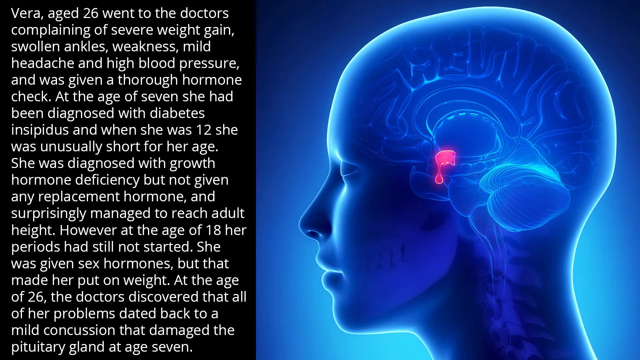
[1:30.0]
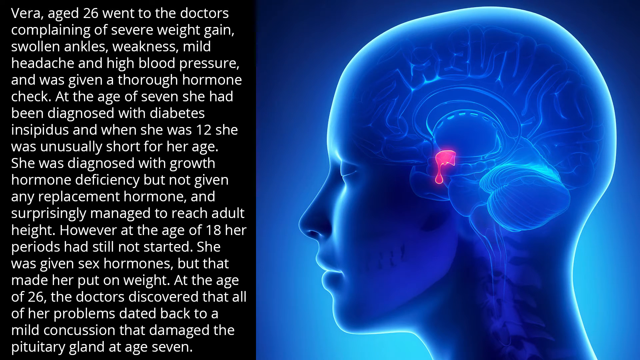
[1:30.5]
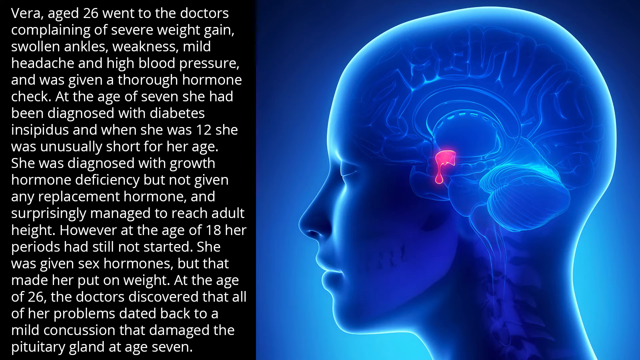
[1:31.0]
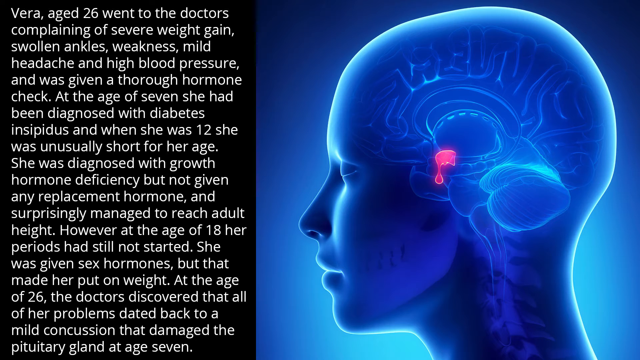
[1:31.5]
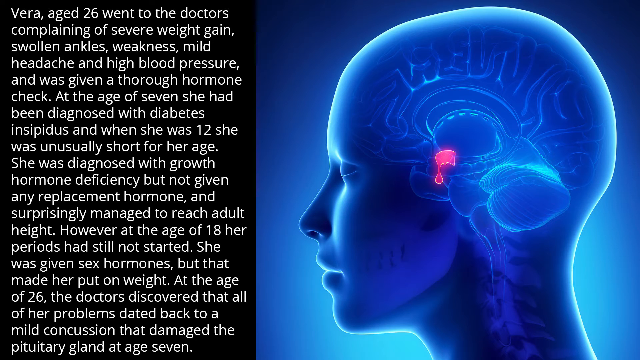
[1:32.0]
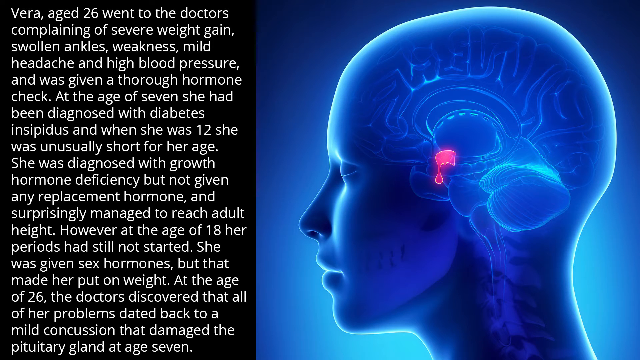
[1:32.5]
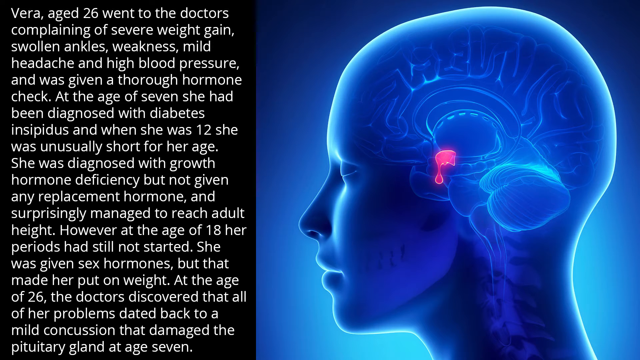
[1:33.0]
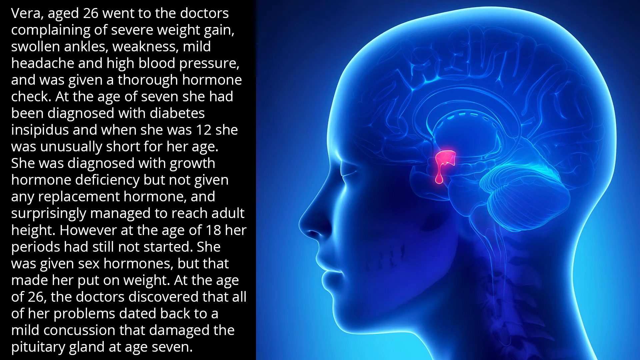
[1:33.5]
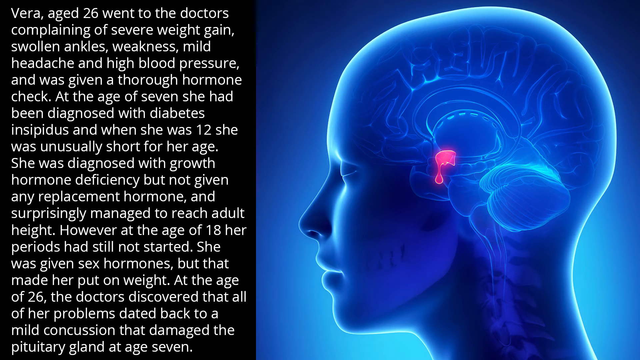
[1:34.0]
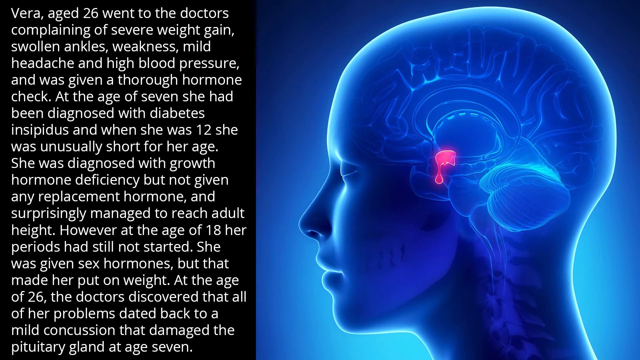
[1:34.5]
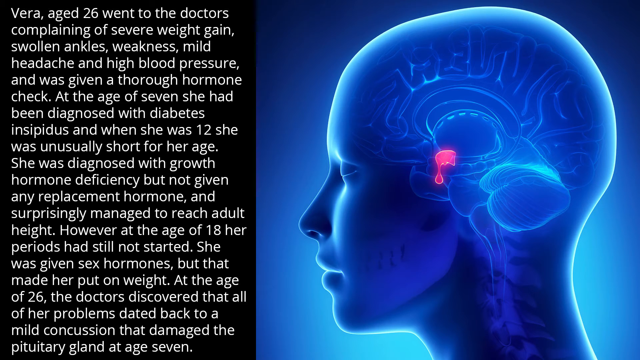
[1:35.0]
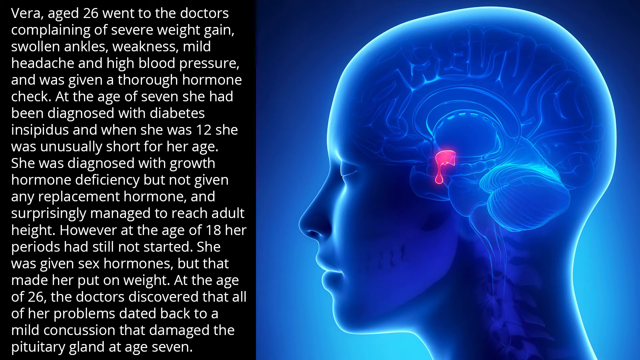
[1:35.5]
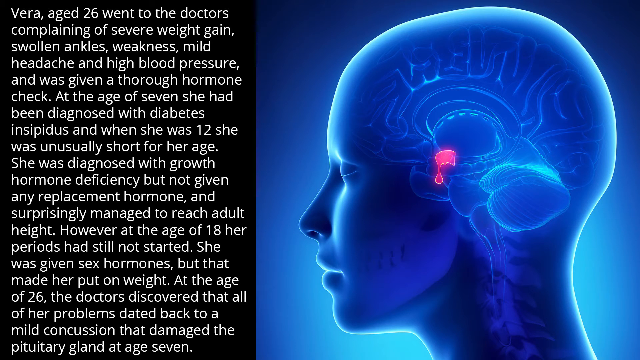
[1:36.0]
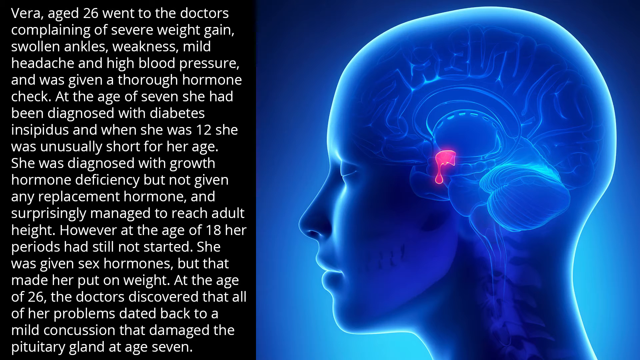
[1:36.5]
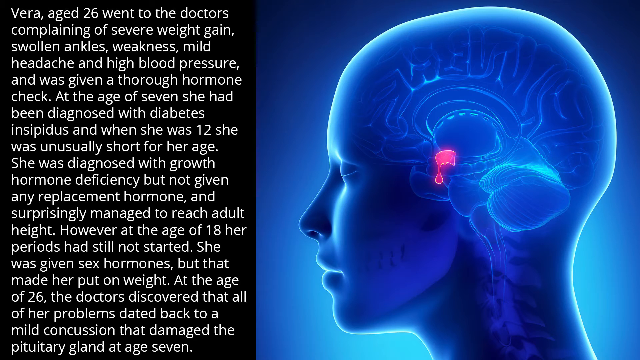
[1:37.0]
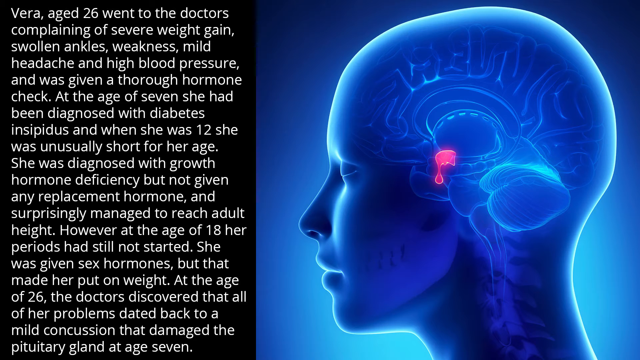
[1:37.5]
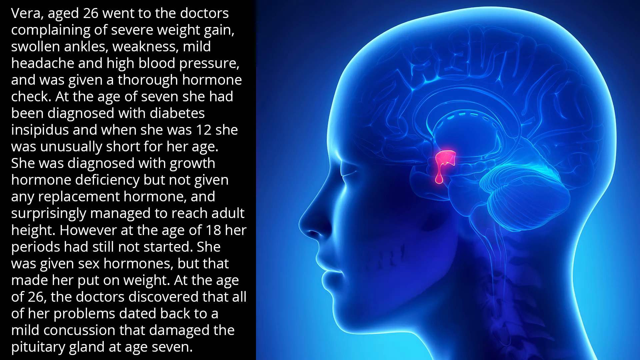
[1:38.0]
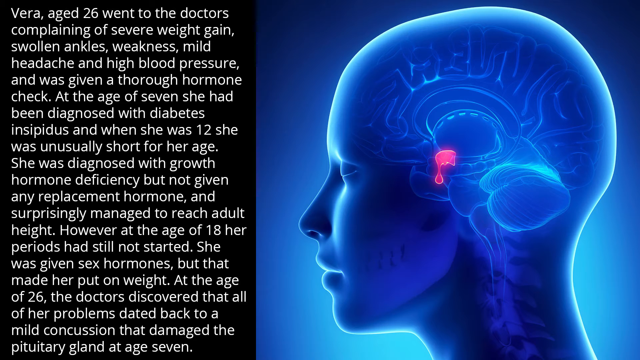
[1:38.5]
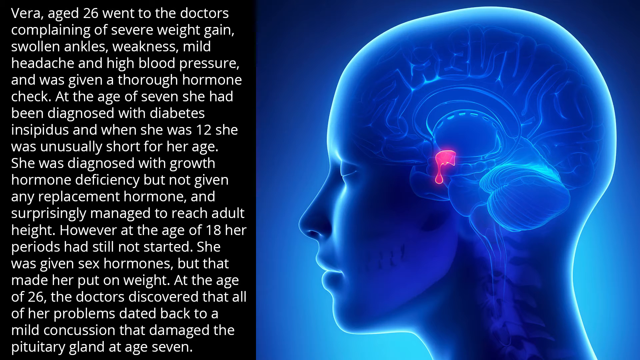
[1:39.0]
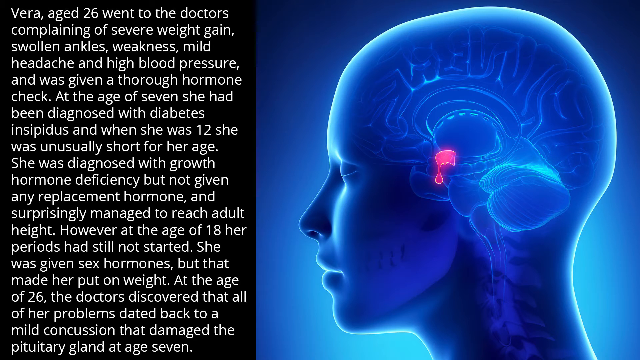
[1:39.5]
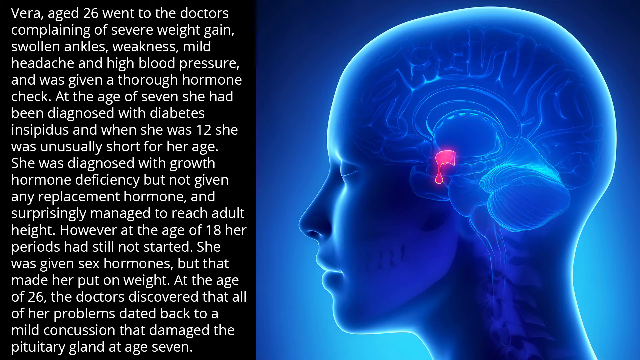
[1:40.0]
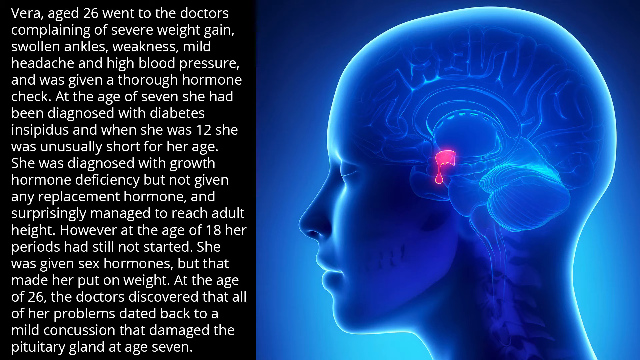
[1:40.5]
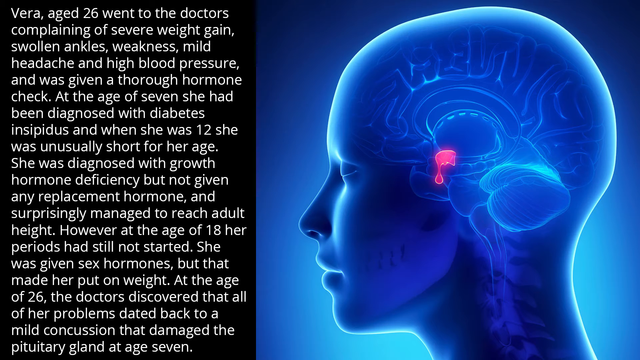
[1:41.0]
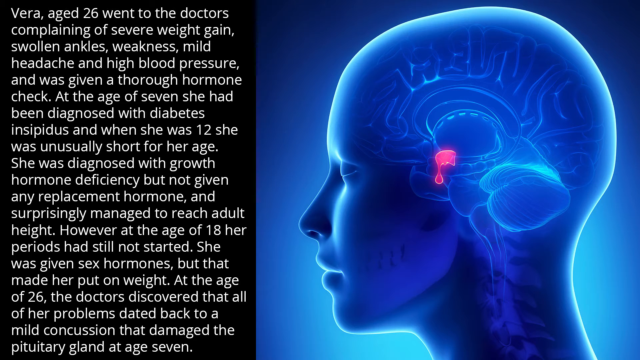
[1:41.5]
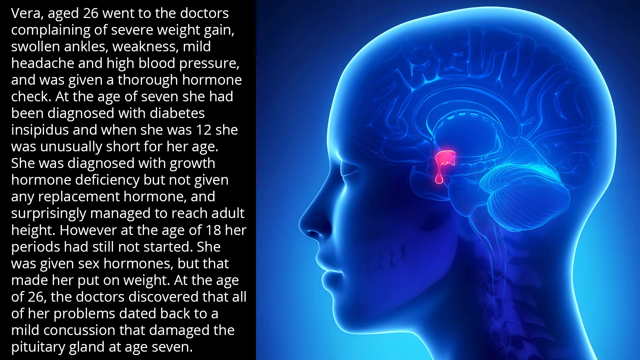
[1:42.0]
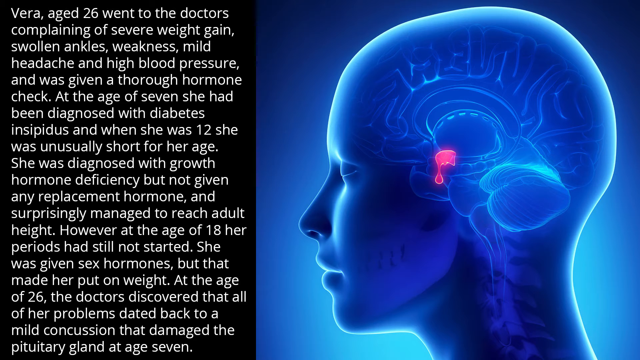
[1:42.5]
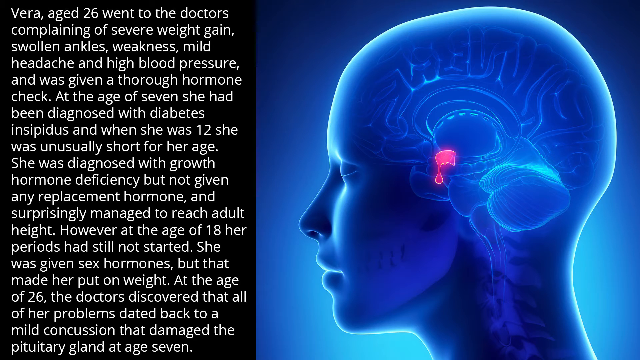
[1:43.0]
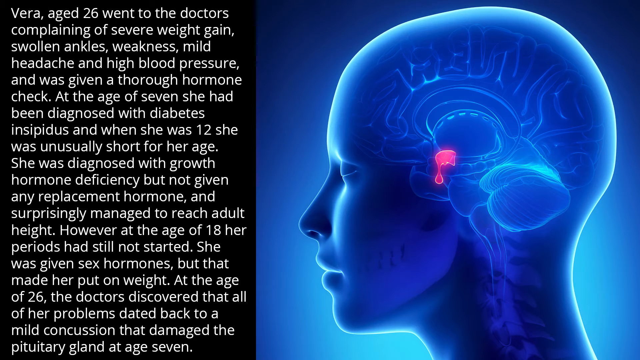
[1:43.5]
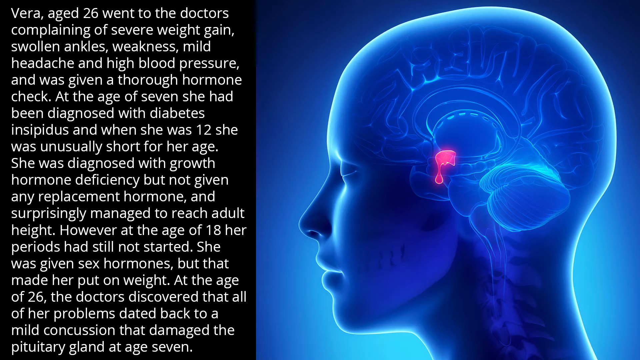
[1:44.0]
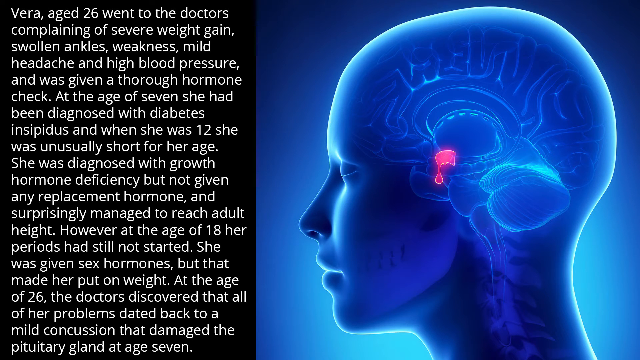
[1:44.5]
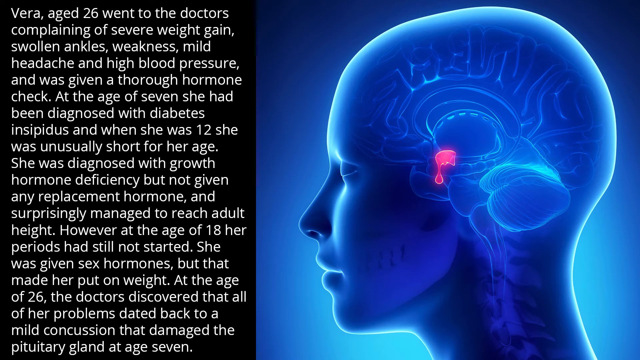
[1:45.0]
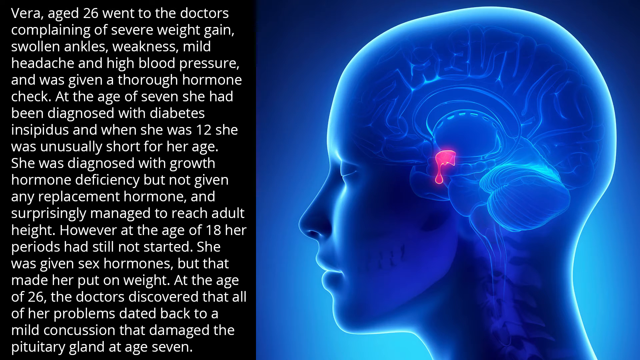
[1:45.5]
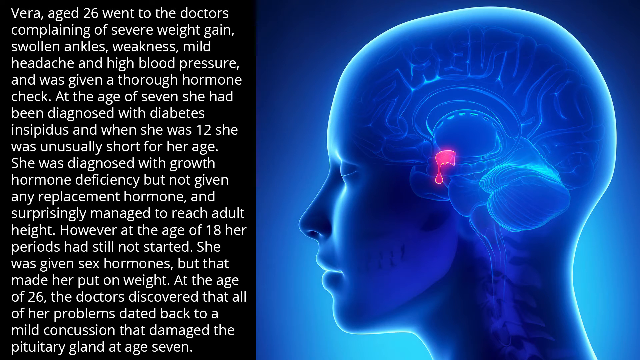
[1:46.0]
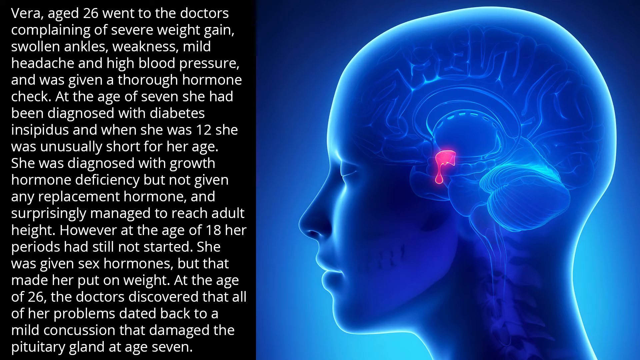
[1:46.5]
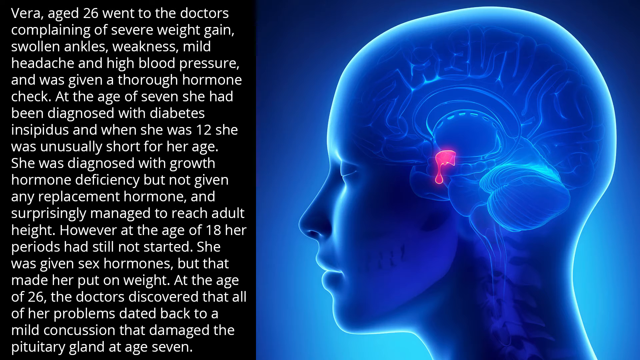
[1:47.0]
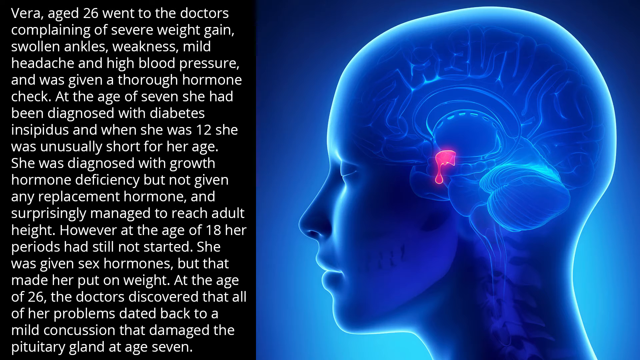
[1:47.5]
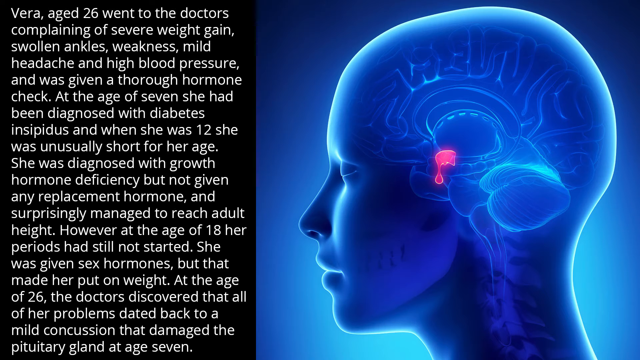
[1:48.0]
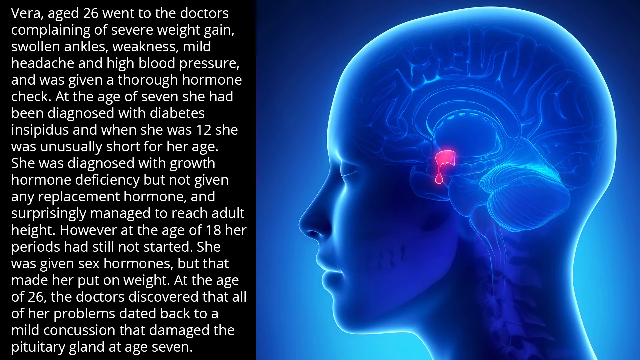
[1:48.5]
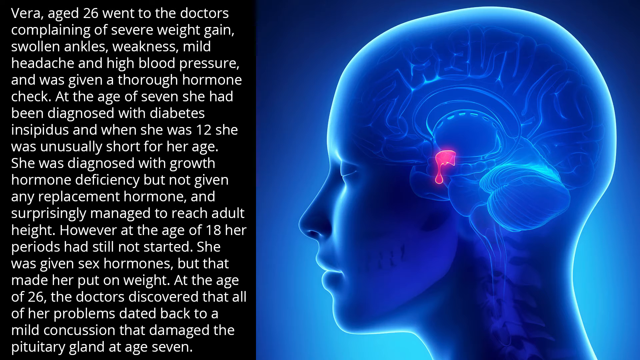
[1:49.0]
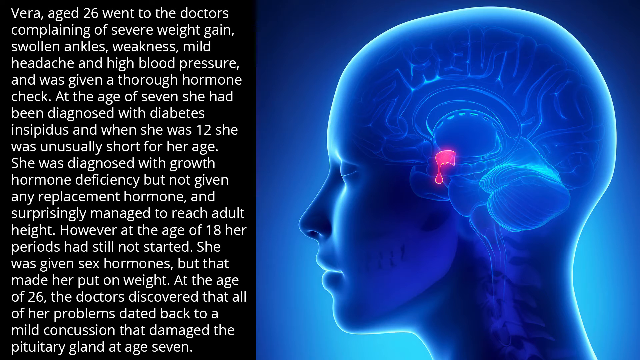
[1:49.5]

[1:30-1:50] A slide of text presents the case study of Vera, who damaged her pituitary gland, which resulted in many unexpected health symptoms: a diabetes diagnosis, general weakness, weight gain, headache and blood pressure problems. The text states that all of her problems date back to a mild concussion at age seven that damaged the pituitary gland. The slide does not change during this part.